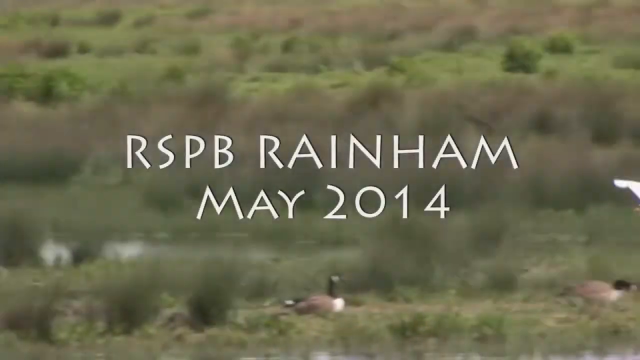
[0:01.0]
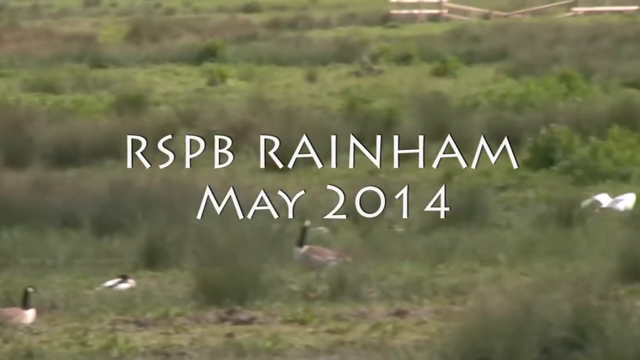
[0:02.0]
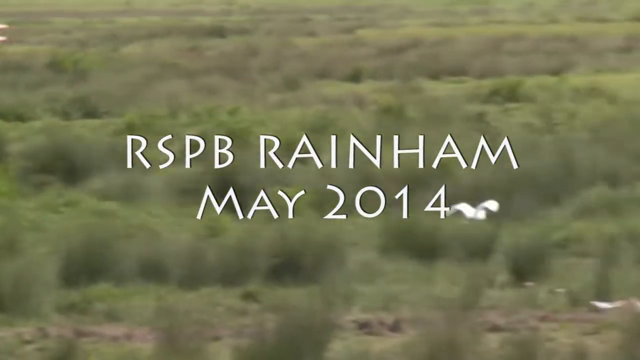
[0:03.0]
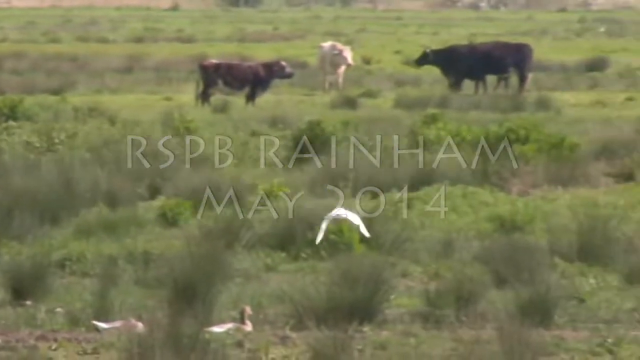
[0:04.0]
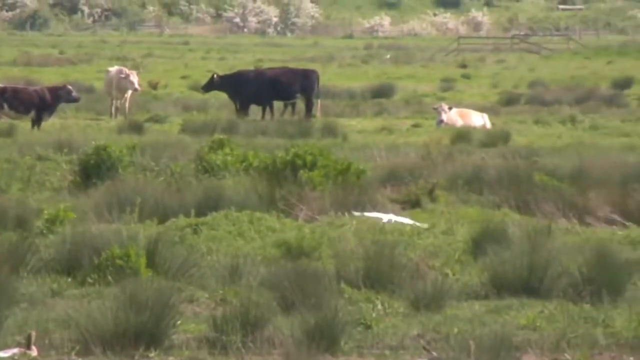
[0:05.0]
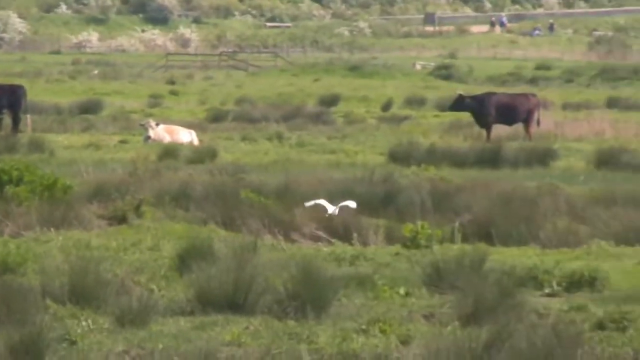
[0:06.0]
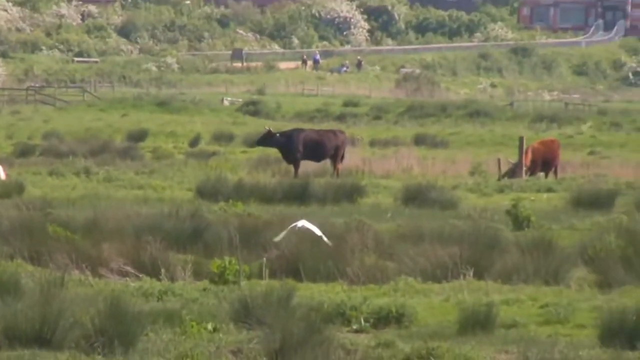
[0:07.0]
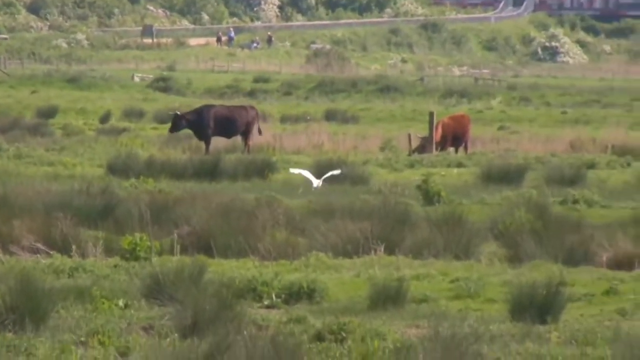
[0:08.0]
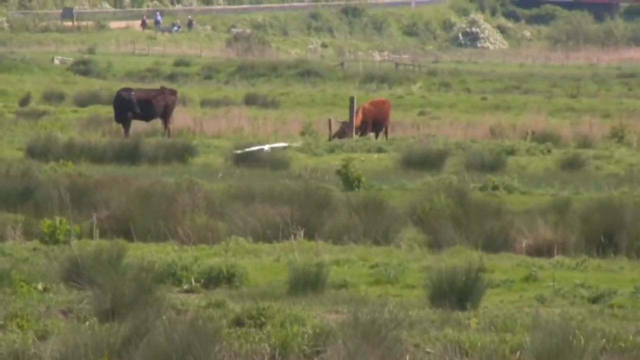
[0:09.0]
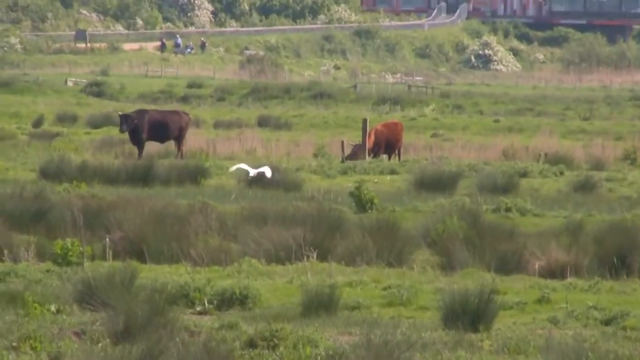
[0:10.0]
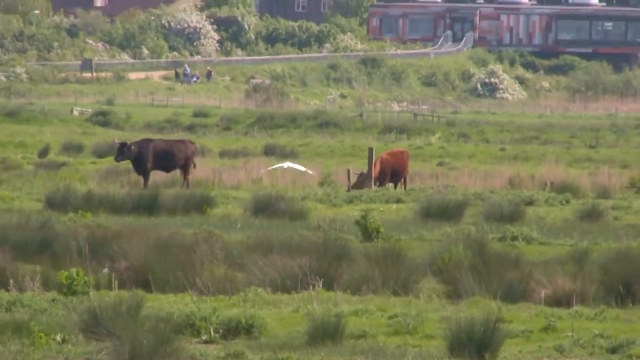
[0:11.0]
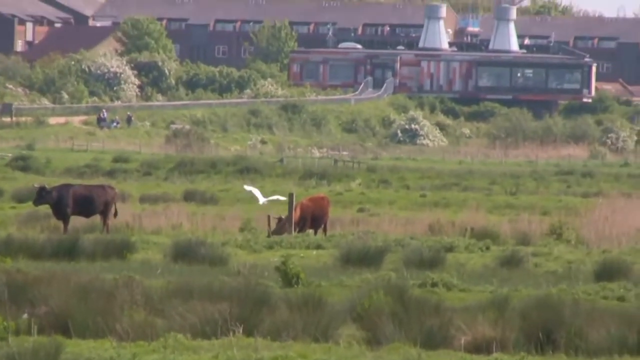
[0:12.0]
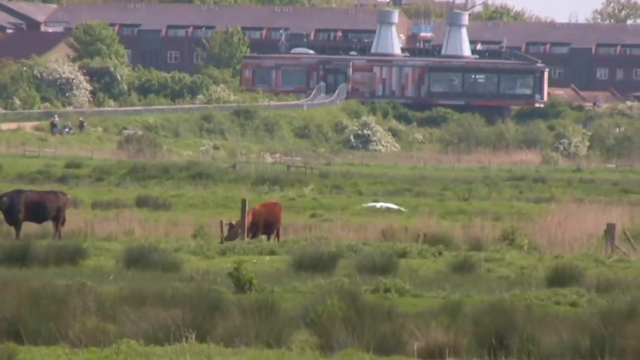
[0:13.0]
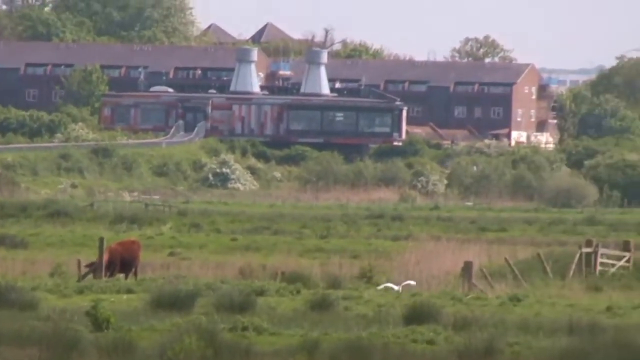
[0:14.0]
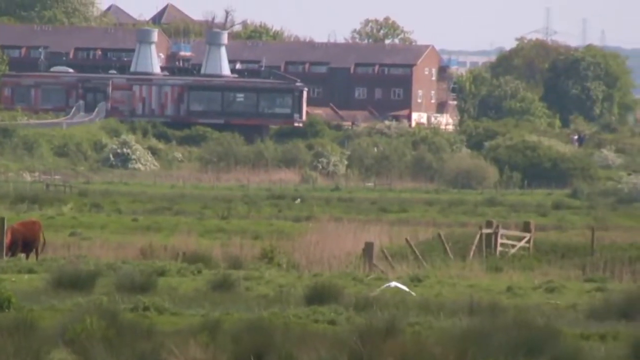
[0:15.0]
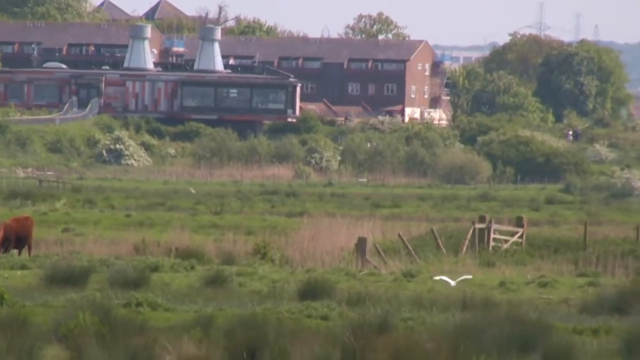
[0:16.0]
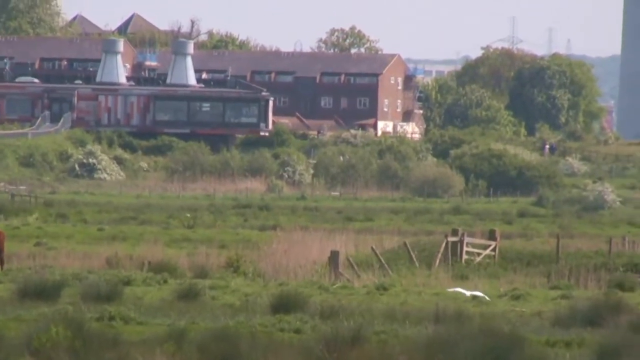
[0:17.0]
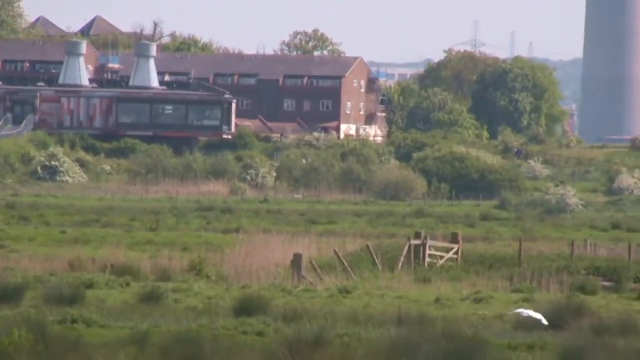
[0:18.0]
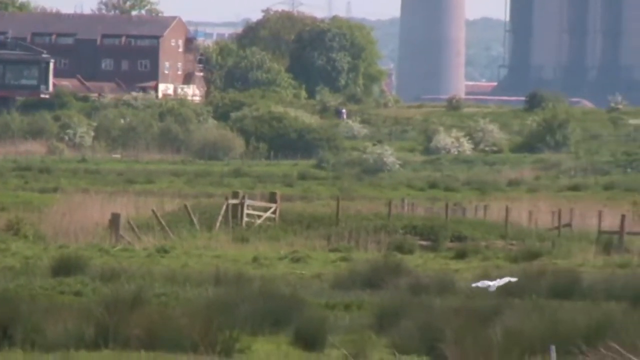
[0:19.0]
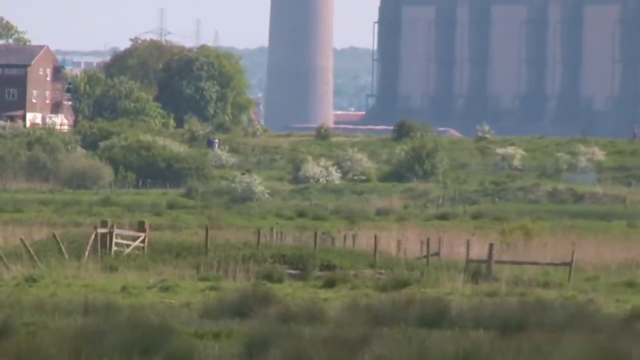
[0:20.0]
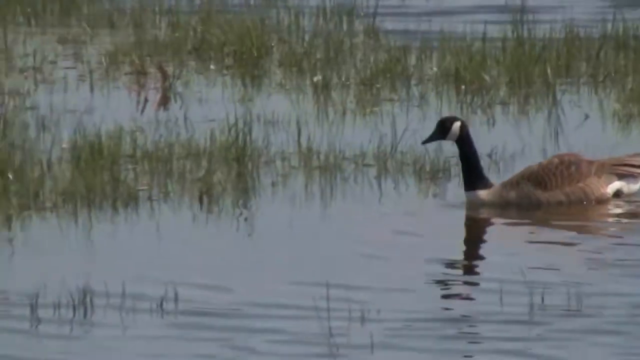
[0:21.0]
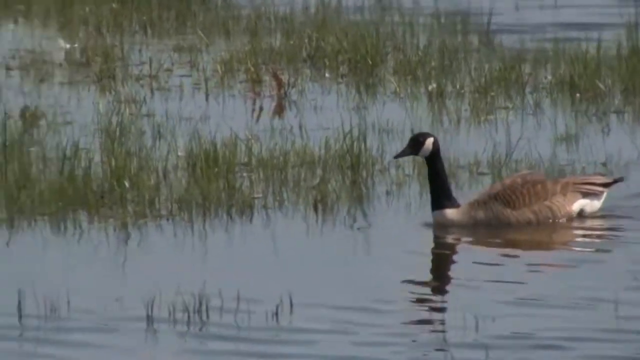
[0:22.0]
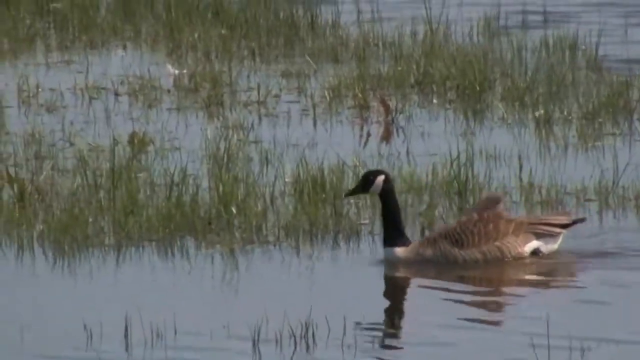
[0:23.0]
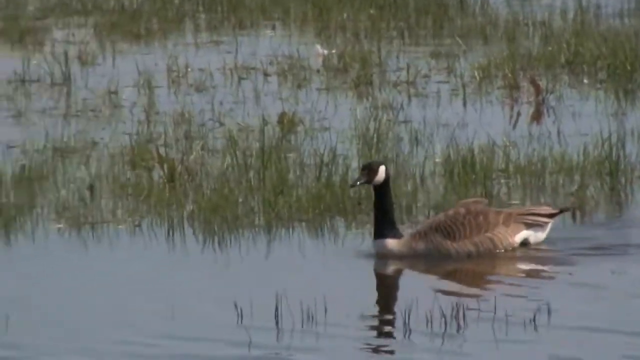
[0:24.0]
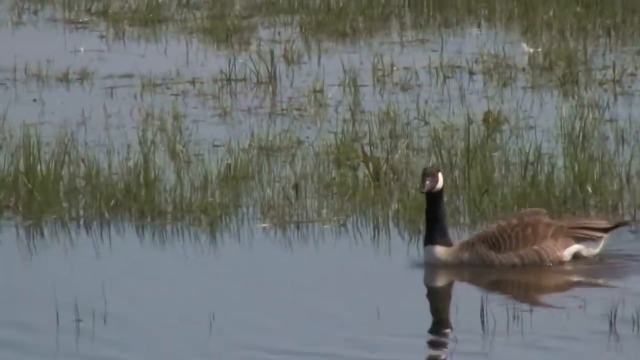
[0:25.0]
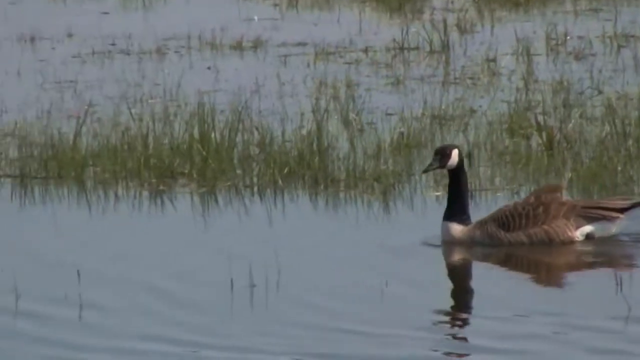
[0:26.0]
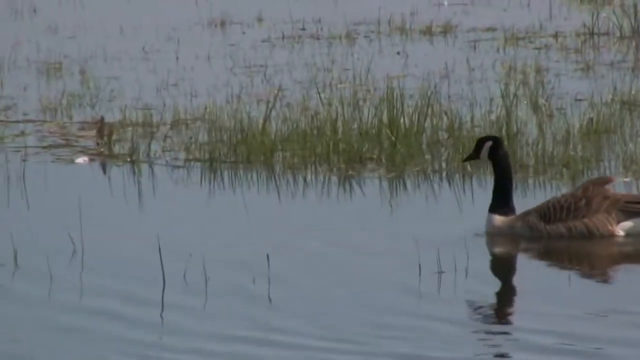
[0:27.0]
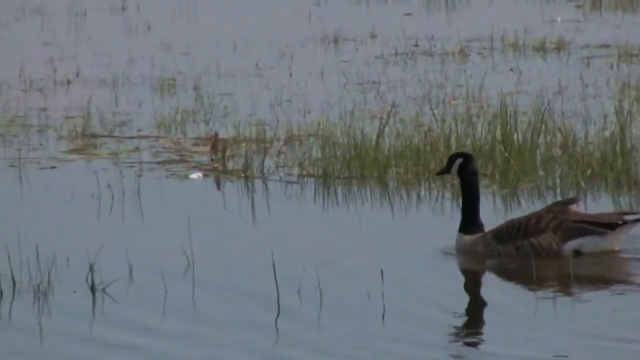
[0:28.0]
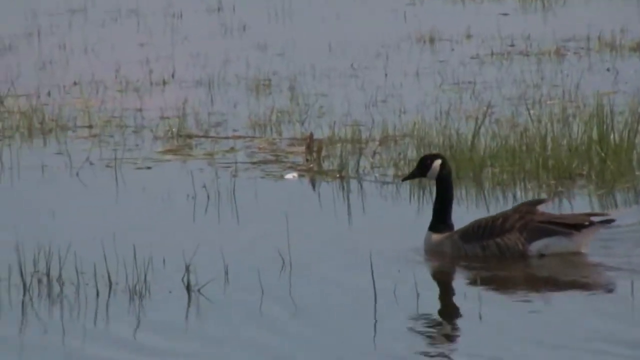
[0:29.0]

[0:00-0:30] White text appears in the middle of the screen reading "RSPB Ryan Ham May 2024". Meanwhile, a white bird flies through what appears to be a paddock on a farm, with cows in the background. Six cows are visible, a mixture of white, black and different shades of brown. The bird keeps flying to the right of the screen, approaching some fence posts. In the background there appear to be some buildings, and it is unclear whether they are residential or industrial; to the right of them are some silo-looking buildings, big, tall and grey, possibly linked to the farm. The farm is quite green. The bird flies on until it eventually stops, and the scene changes completely to a duck swimming through some water. The duck has brown feathers on its body and a black neck with a little white, and it swims to the left of the screen. Small reeds poke through the water, and the duck looks around a little as it swims.